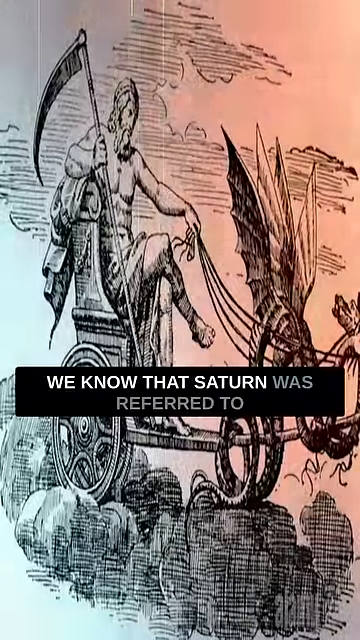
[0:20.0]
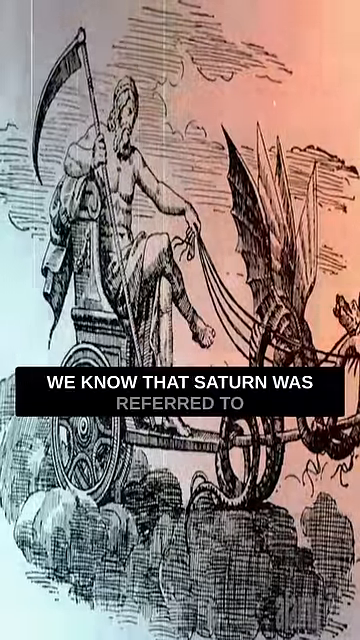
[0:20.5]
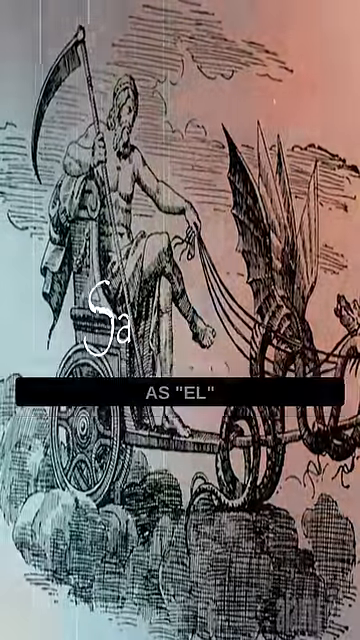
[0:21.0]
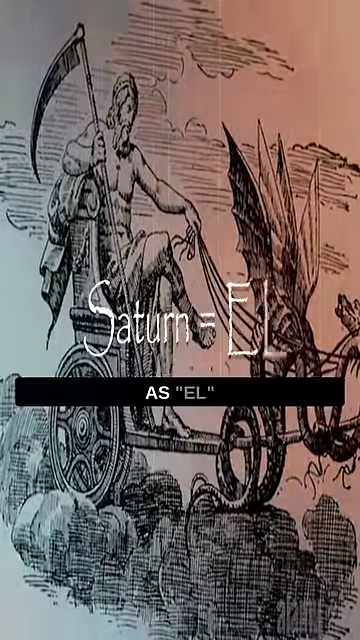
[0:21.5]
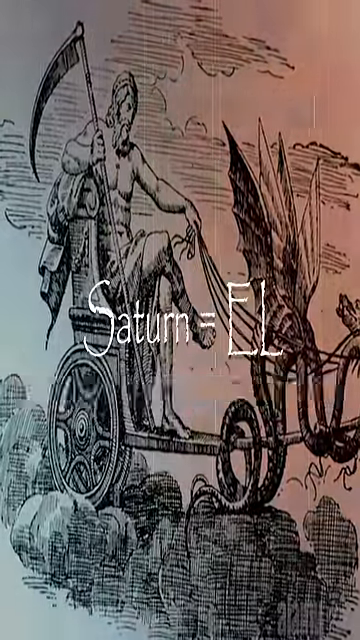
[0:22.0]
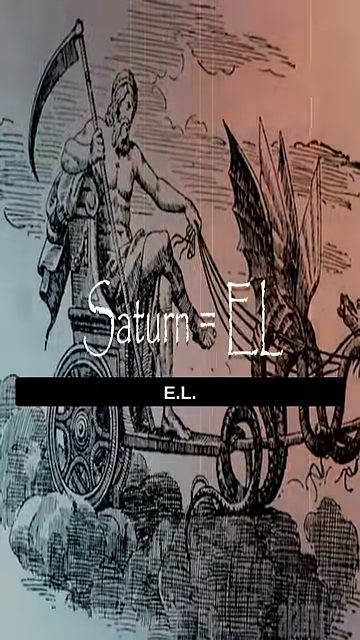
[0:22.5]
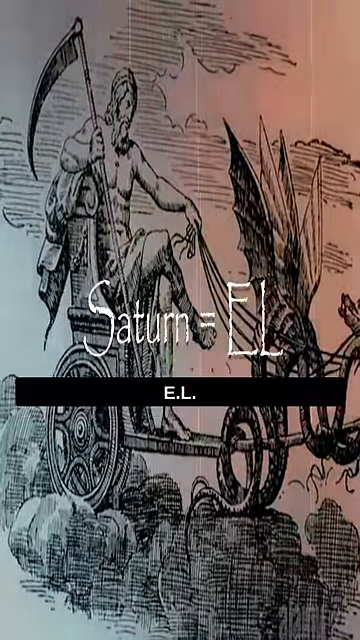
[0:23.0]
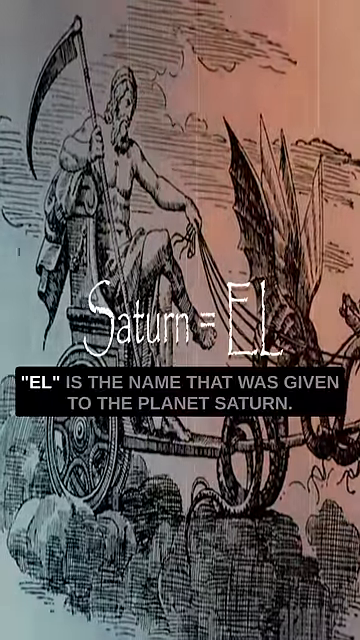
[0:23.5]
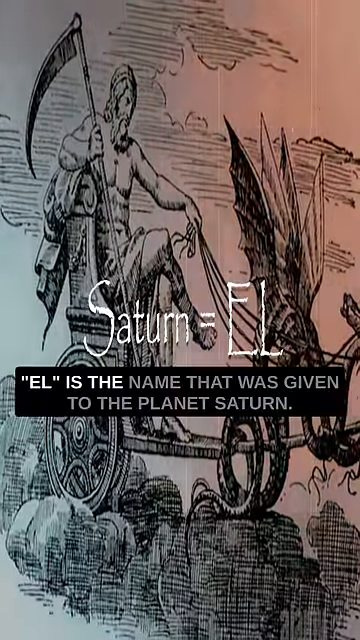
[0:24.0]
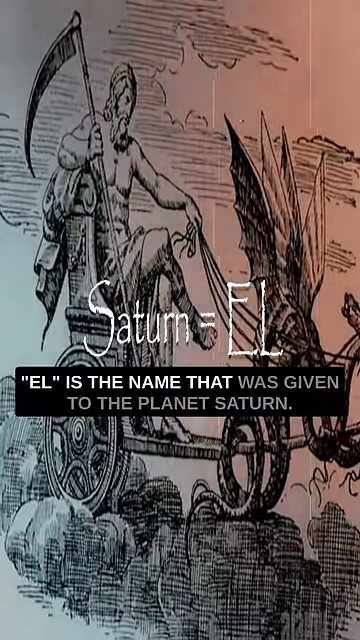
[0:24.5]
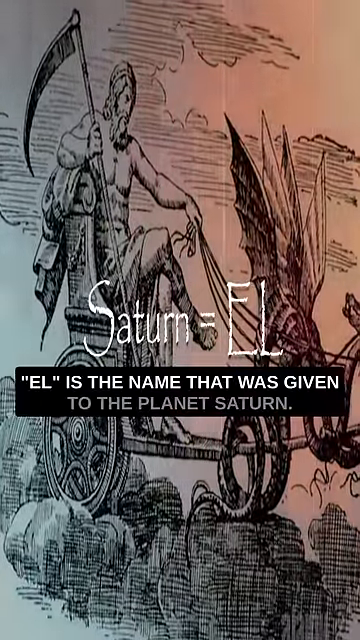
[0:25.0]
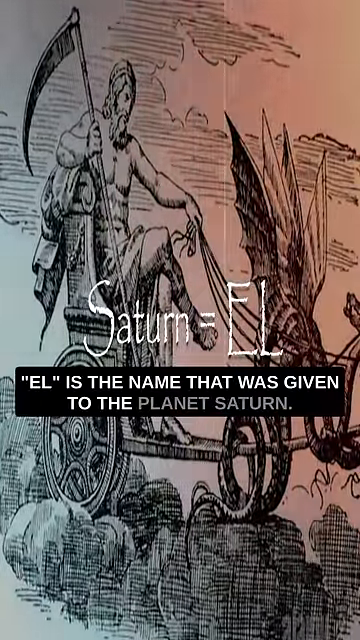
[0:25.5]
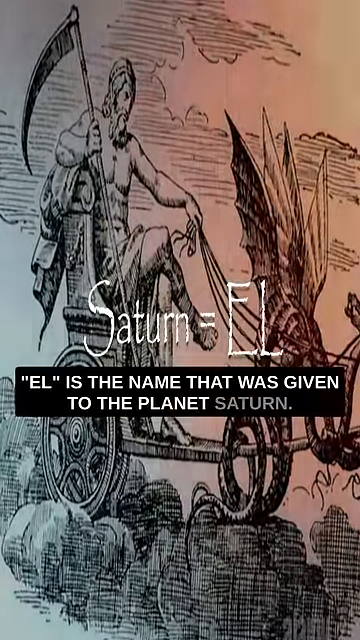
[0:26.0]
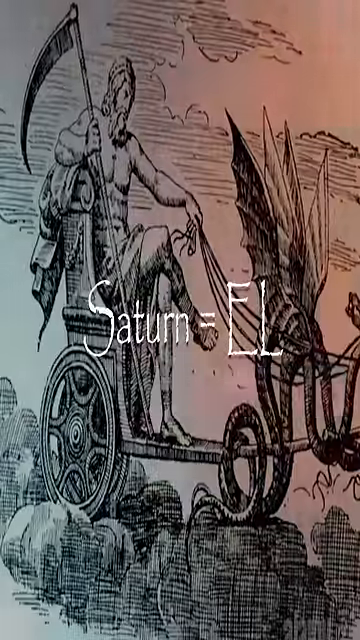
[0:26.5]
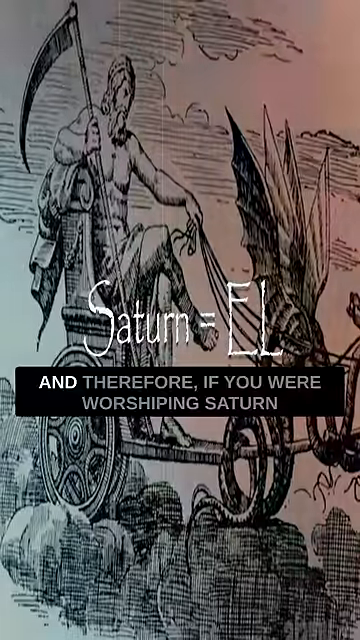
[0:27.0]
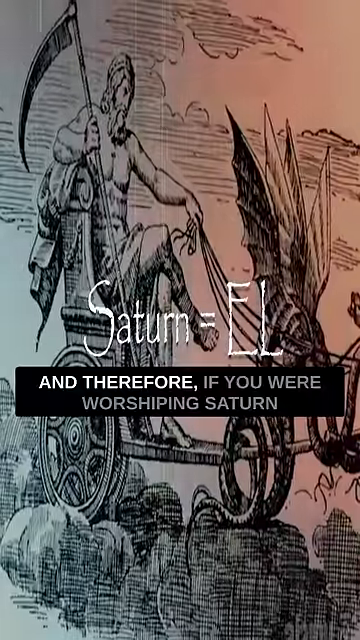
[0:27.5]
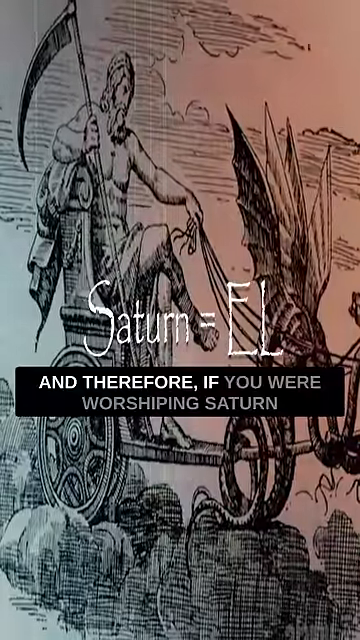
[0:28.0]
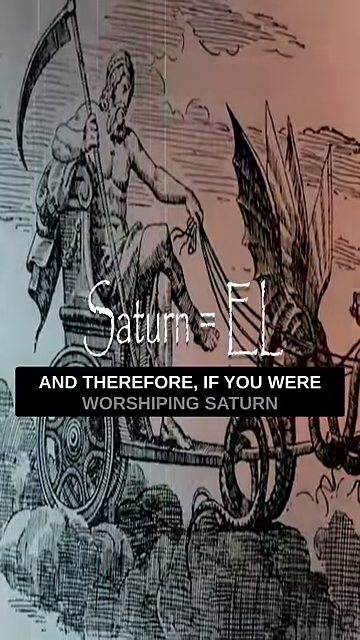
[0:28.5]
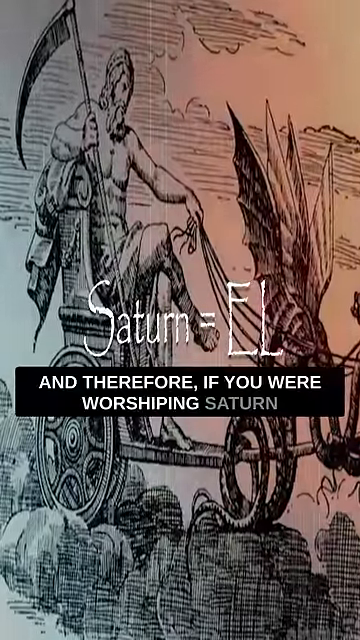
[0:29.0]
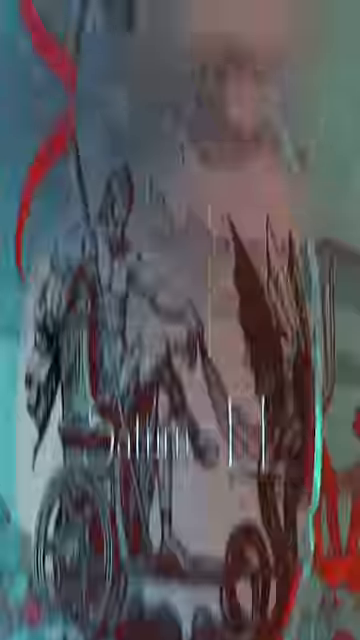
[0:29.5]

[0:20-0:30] In a frame a little taller than it is wide, a black-and-white pencil drawing shows a muscular, shirtless man sitting in a chariot, facing right and holding a sickle in his right arm. In his left hand he holds the reins to whatever is apparently pulling the chariot. His right leg is draped over his left in a relaxed position, and he wears a sandal. Overlaid text at the bottom, in white capital letters on a black background, reads "we know that Saturn was referred to, Saturn equals EL." The text then changes to "EL is the name that was given to the planet Saturn. And therefore, if you were worshiping Saturn," and the scene changes to a red background with a person in the middle whose back is to the viewer.